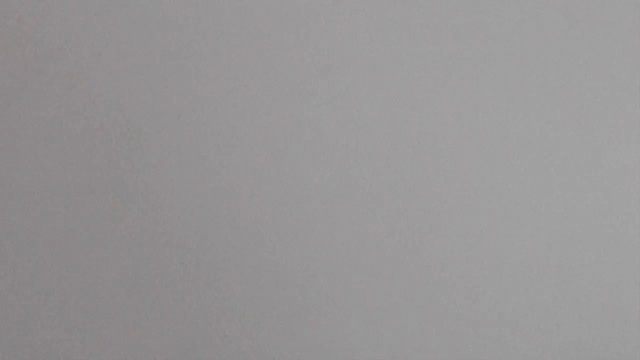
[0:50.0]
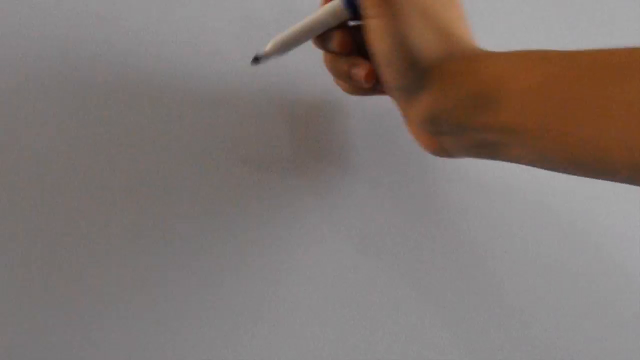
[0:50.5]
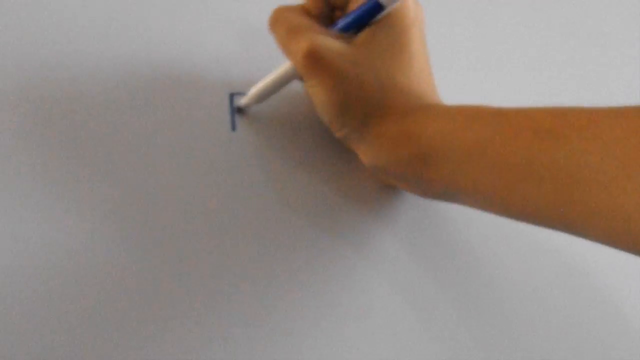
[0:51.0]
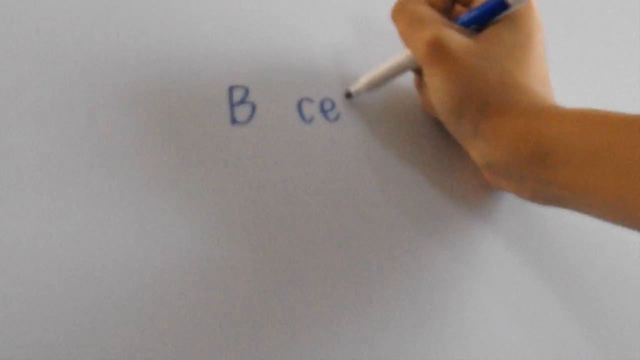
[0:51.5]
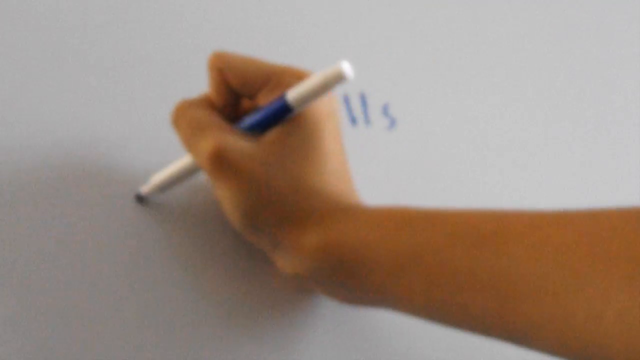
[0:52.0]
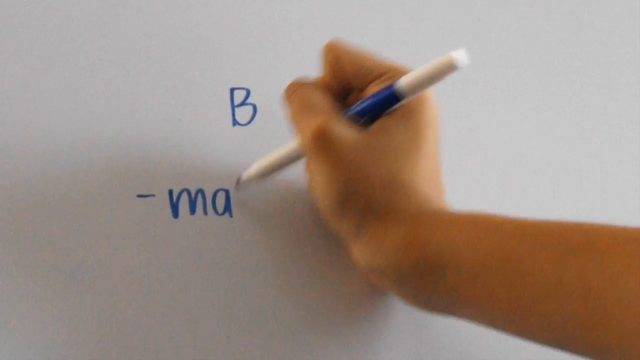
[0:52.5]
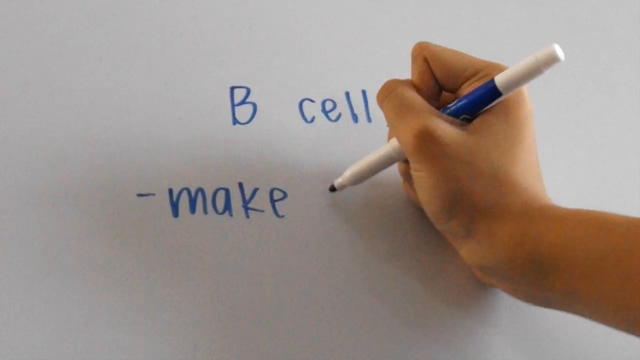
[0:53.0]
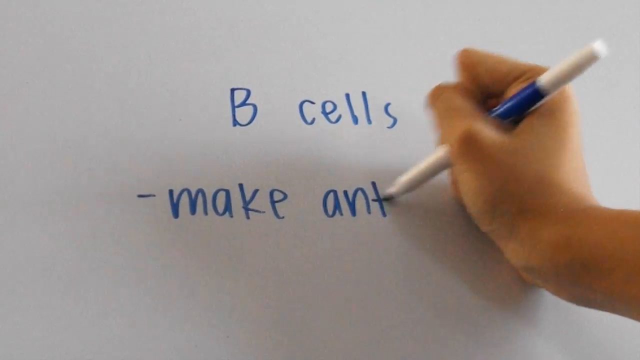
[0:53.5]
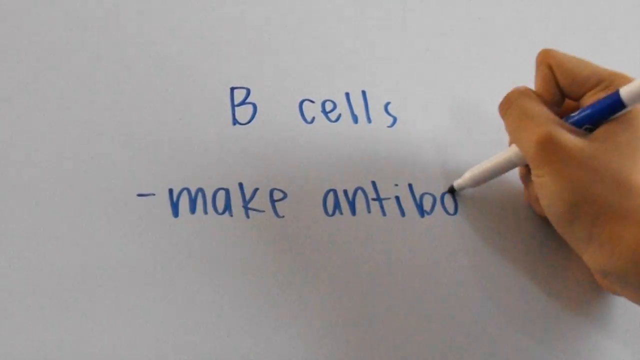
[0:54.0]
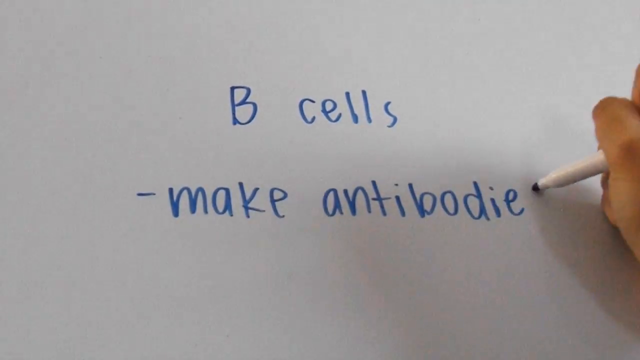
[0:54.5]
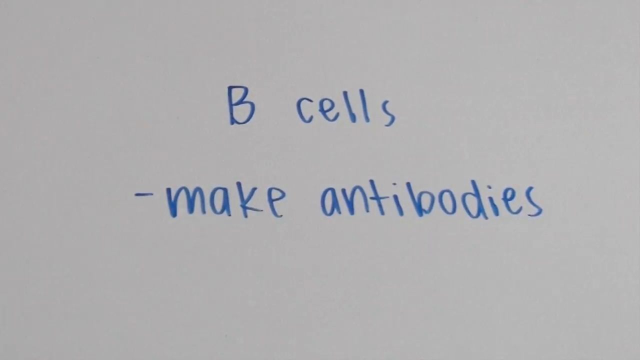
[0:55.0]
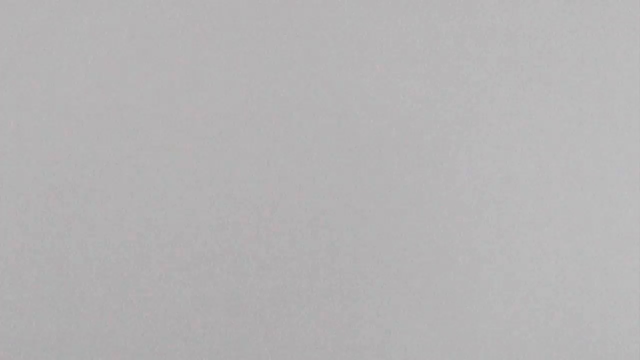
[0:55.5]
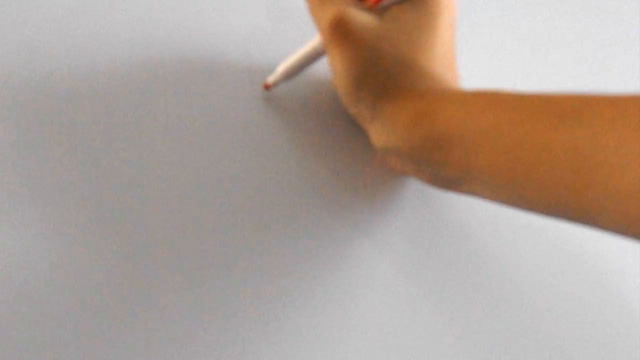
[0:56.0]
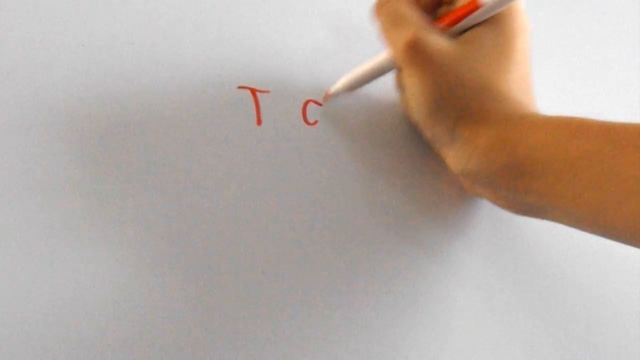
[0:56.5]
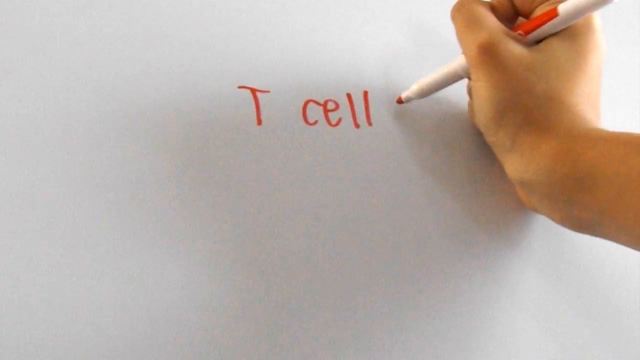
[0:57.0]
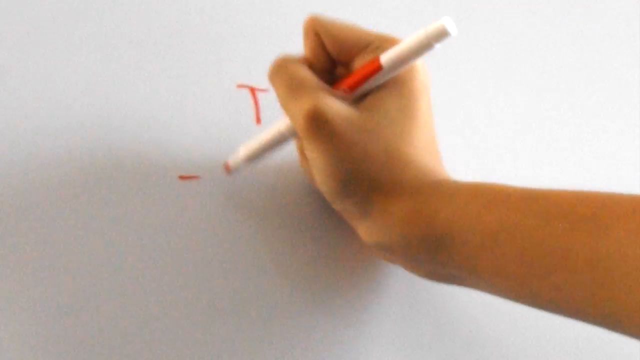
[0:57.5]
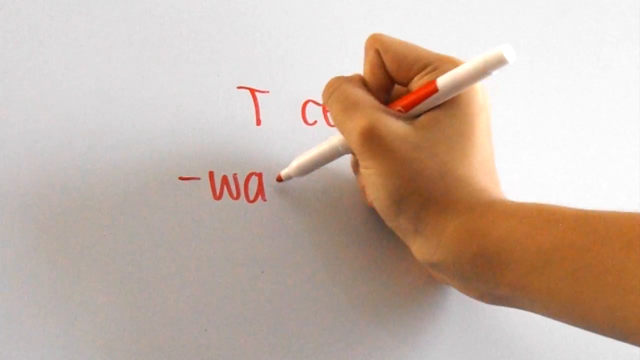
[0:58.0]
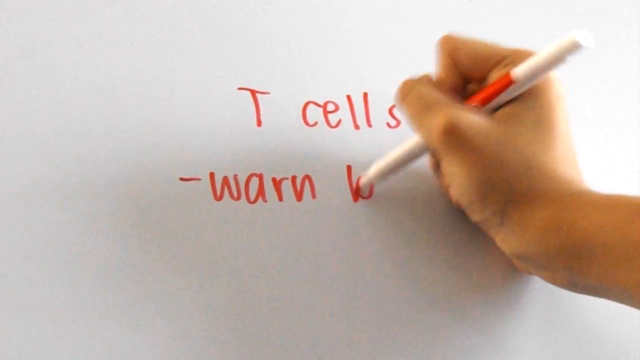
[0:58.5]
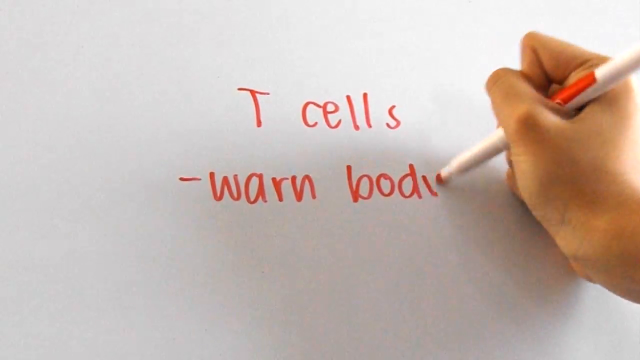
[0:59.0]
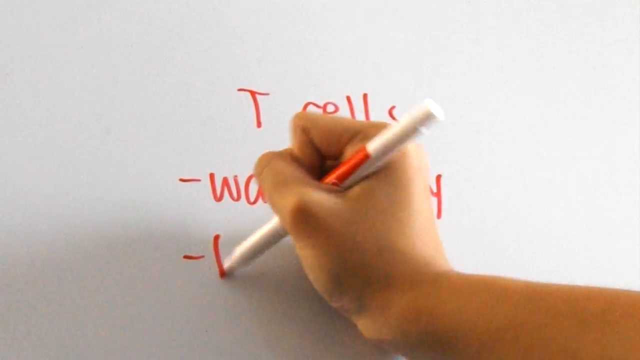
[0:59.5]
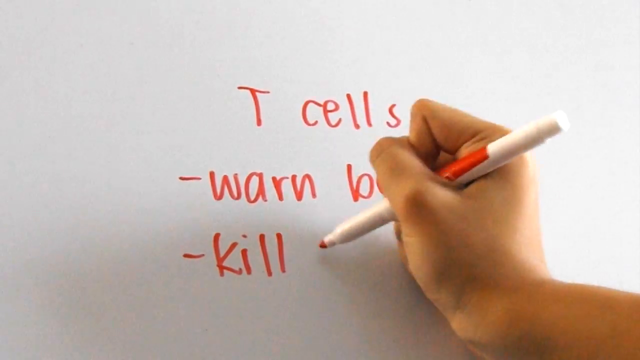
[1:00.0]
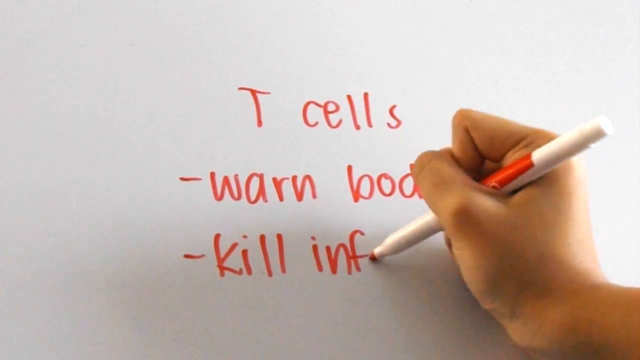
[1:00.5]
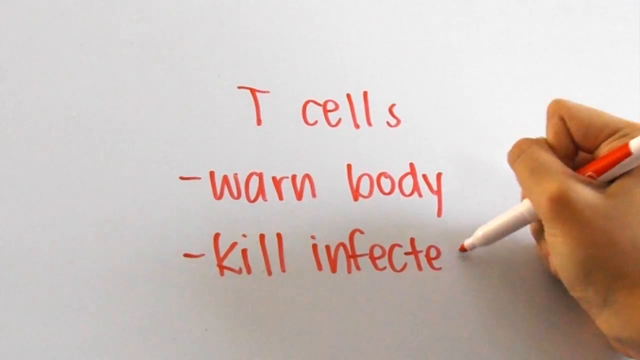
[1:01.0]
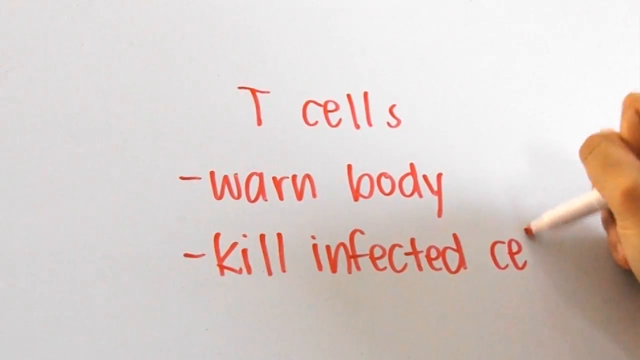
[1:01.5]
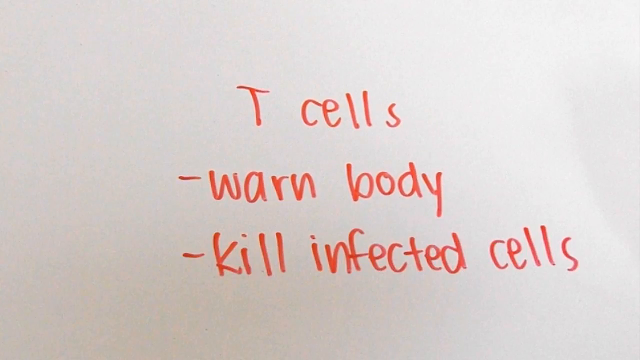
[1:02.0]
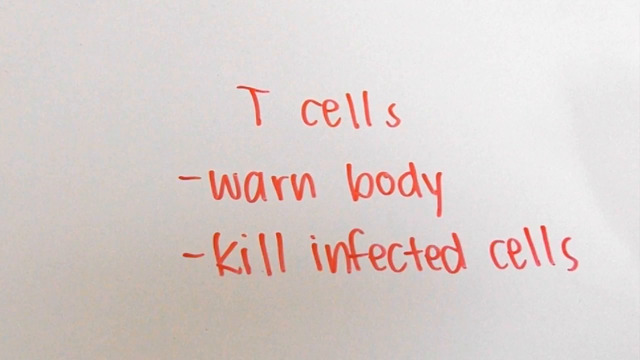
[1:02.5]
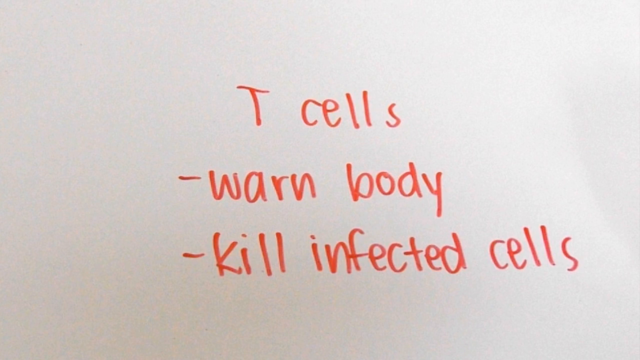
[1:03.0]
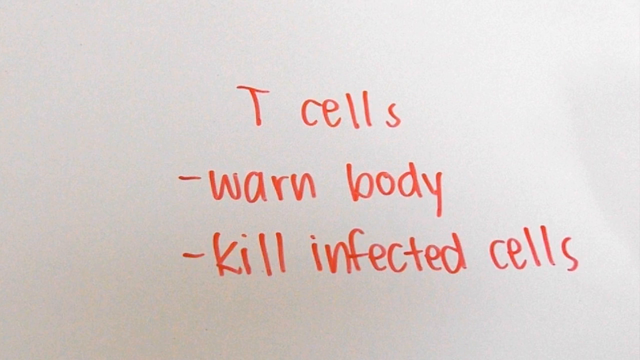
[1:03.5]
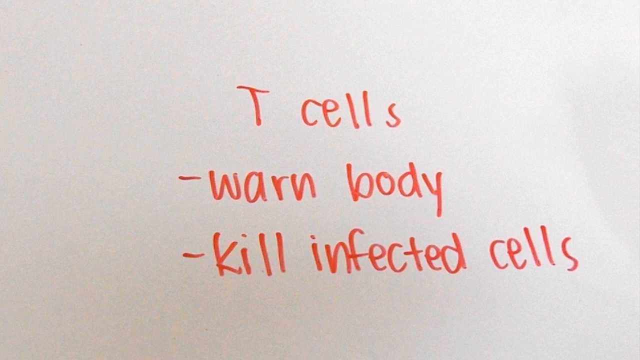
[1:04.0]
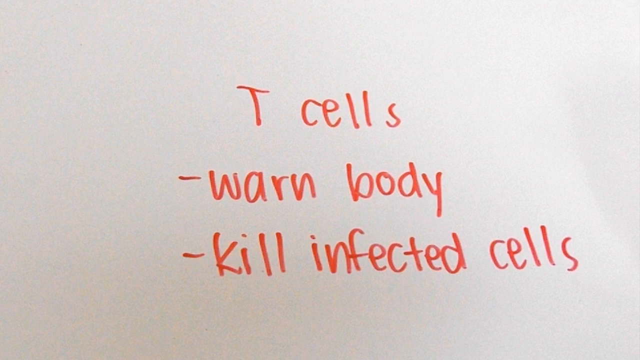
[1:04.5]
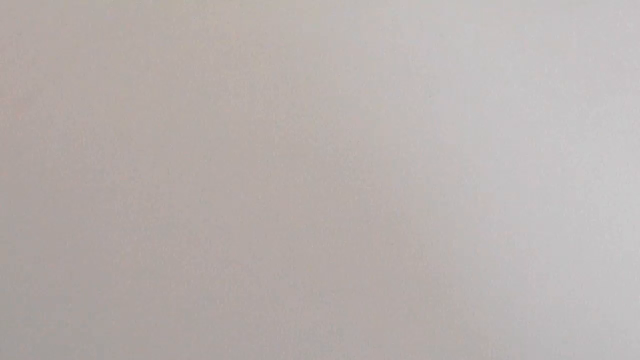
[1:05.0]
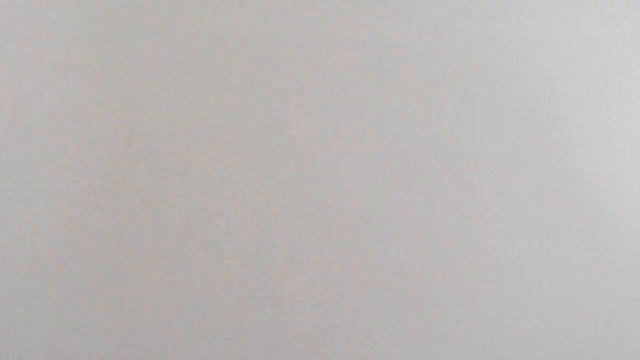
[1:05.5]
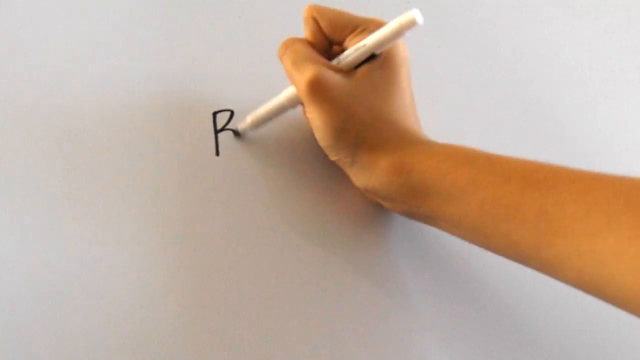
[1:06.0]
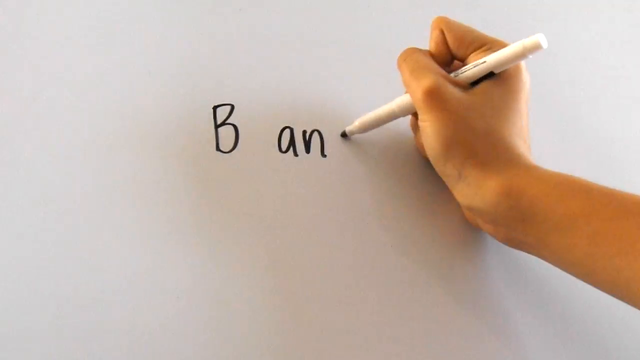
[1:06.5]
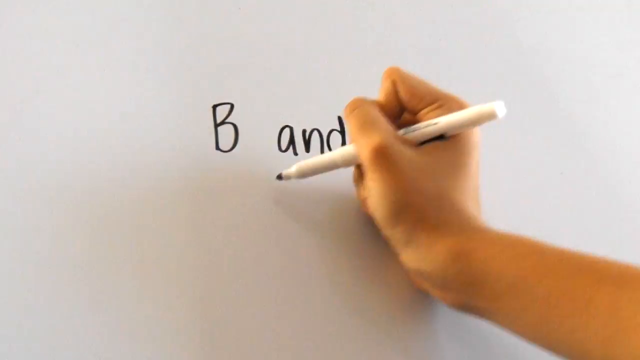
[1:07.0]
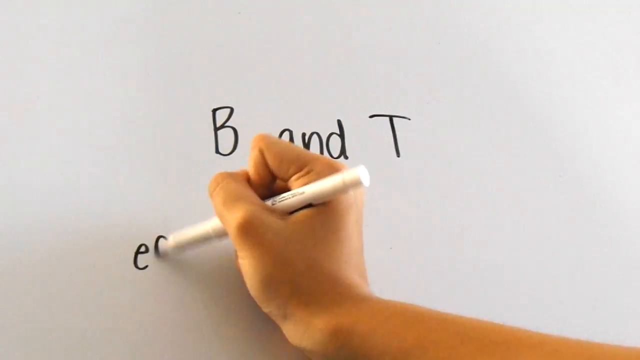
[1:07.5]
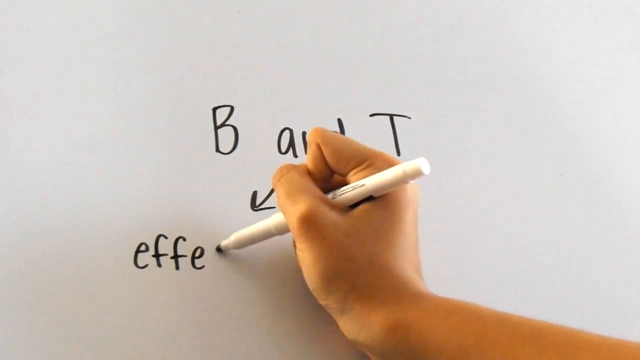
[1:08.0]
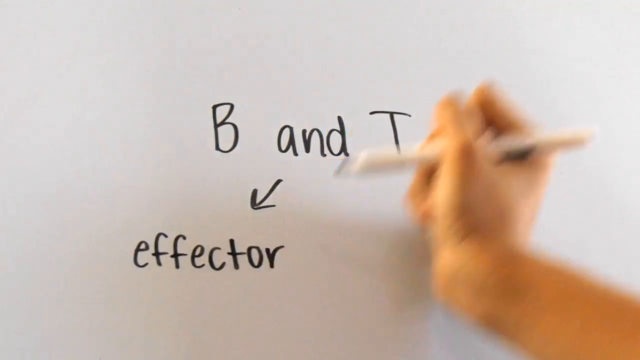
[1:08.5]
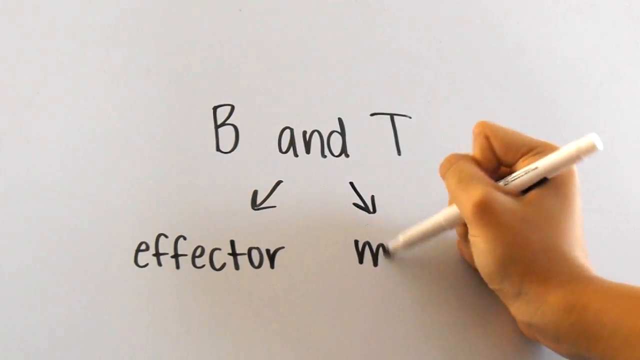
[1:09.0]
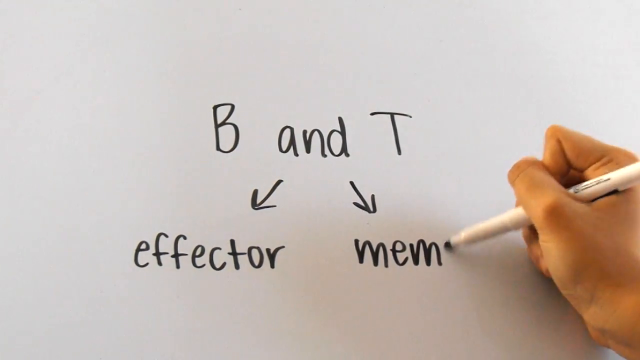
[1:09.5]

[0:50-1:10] The screen looks grey for a moment, apparently from the hand's shadow, then the hand moves and its shadow moves away, revealing the white surface the hand writes on. The hand has exchanged the black marker for a blue marker: the body of the pen is still white, but the tip and the cap at the back are both blue. The camera goes in and out of focus; as the hand writes "B CELLS" in the top middle of the surface, it is a little blurry, comes into focus, goes out of focus, then comes back into focus. Underneath "B CELLS" the hand writes a dash and "MAKE ANTIBODIES". That disappears, and the hand returns with a red marker, writing "T CELLS" in the top middle, then below it a dash and "WARN BODY", and below that a dash and "KILL INFECTED CELLS".